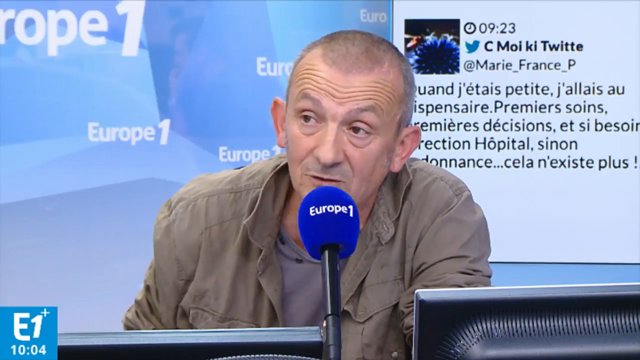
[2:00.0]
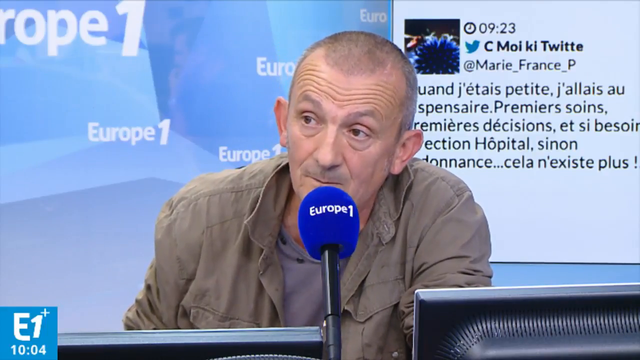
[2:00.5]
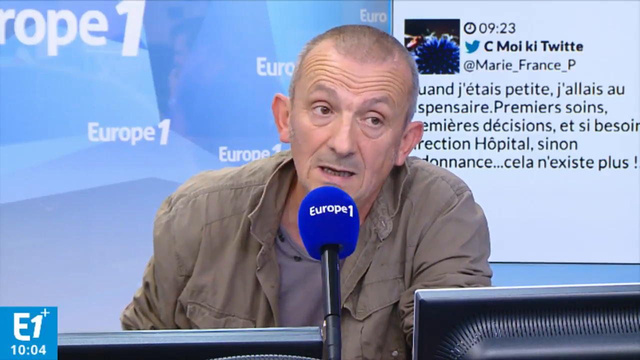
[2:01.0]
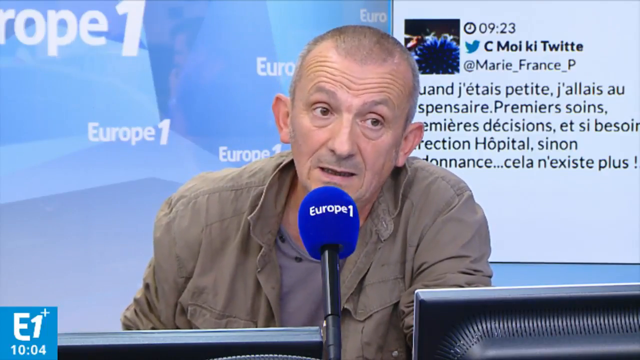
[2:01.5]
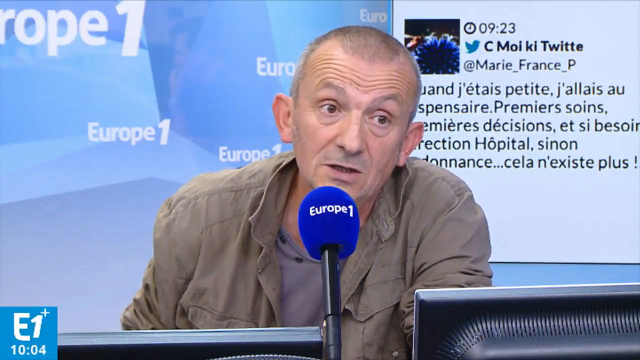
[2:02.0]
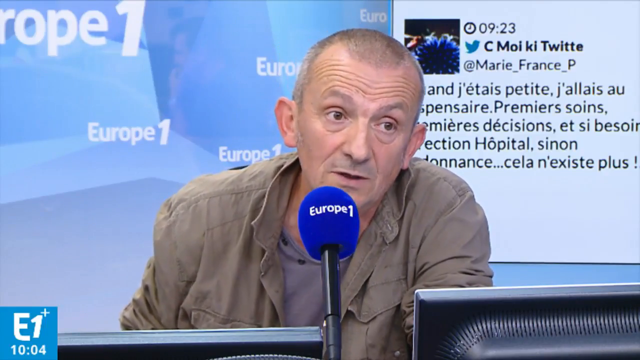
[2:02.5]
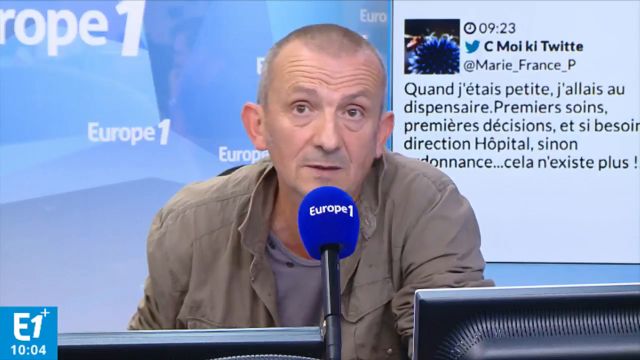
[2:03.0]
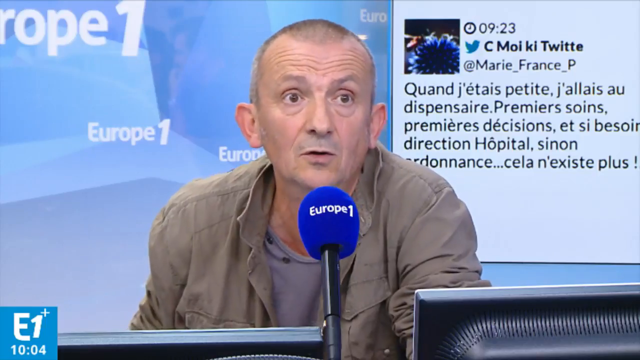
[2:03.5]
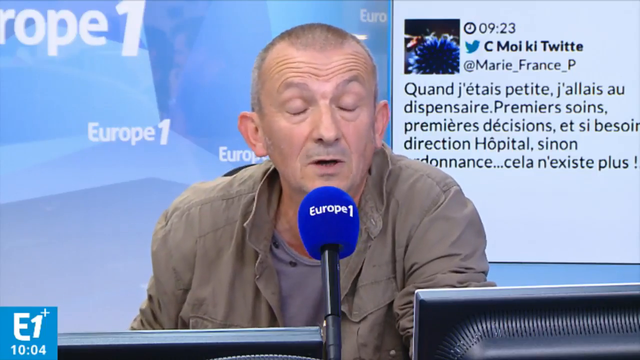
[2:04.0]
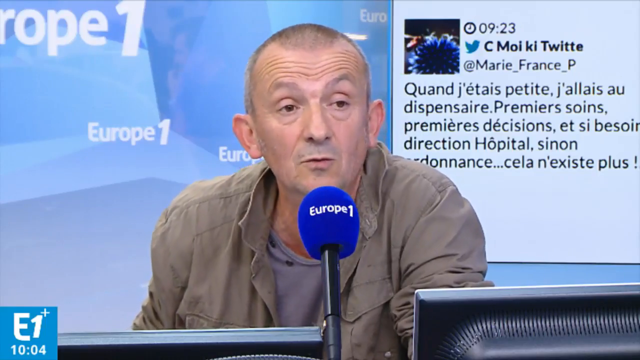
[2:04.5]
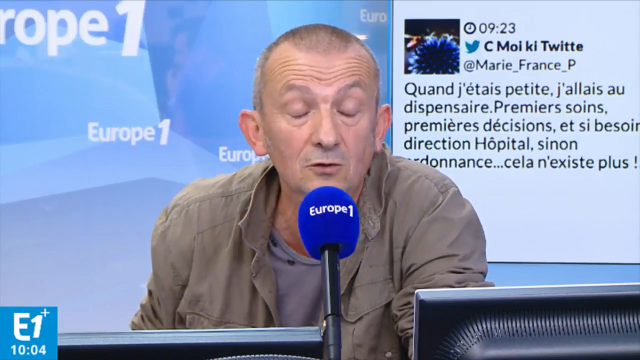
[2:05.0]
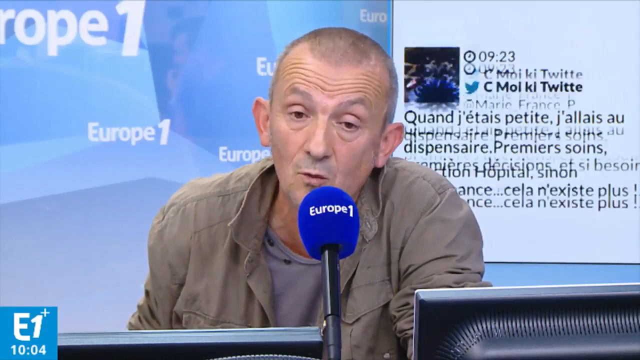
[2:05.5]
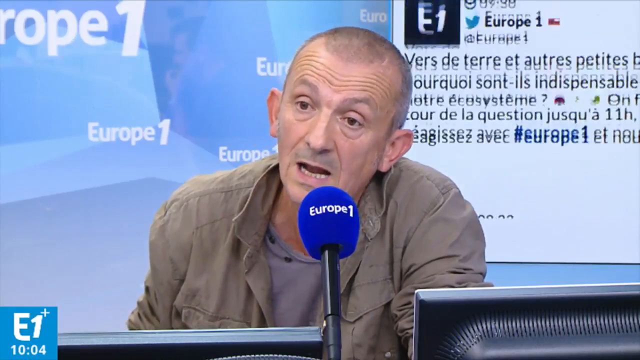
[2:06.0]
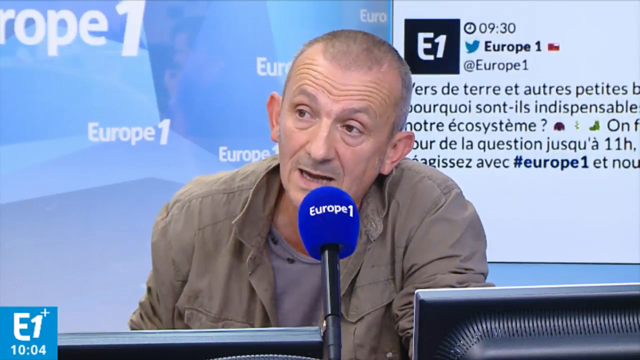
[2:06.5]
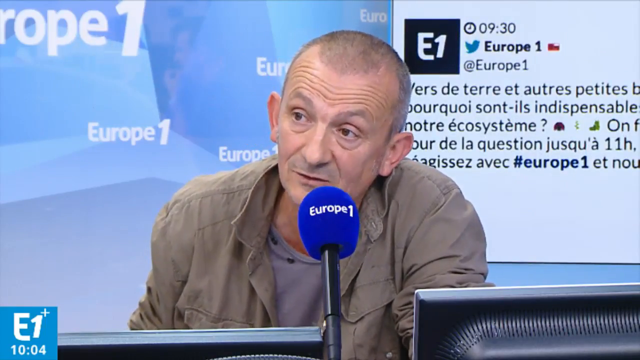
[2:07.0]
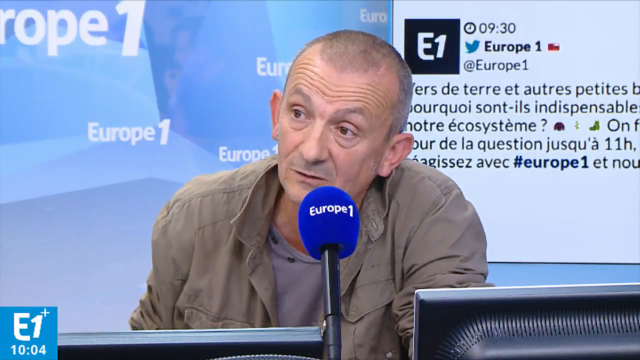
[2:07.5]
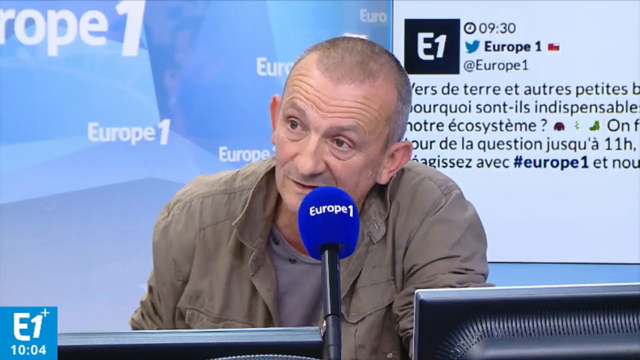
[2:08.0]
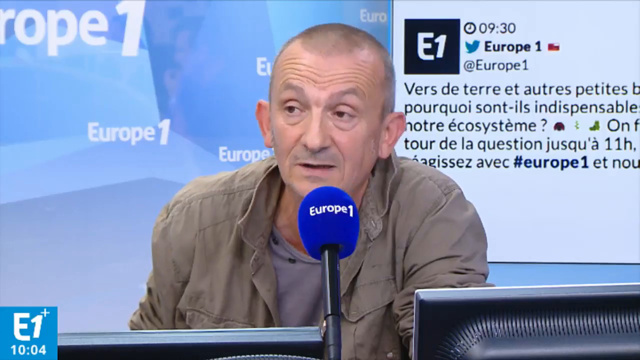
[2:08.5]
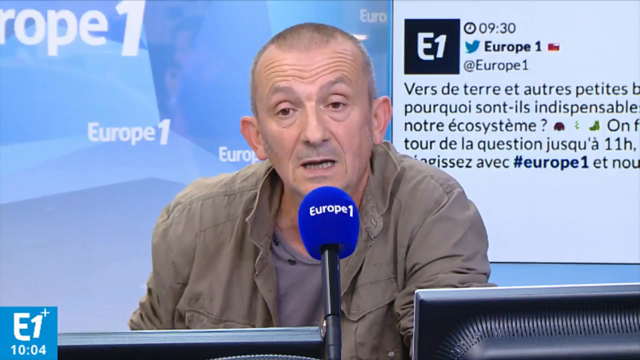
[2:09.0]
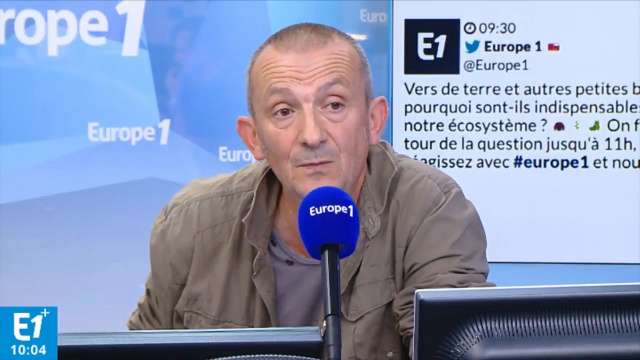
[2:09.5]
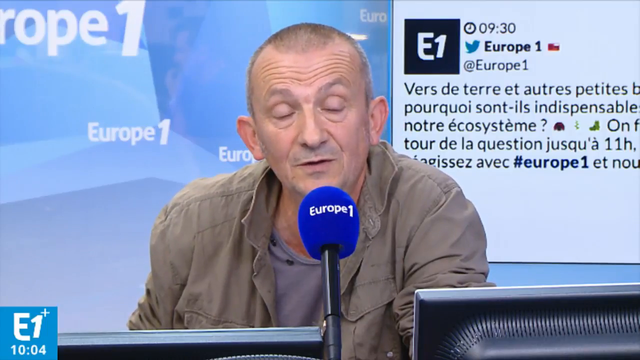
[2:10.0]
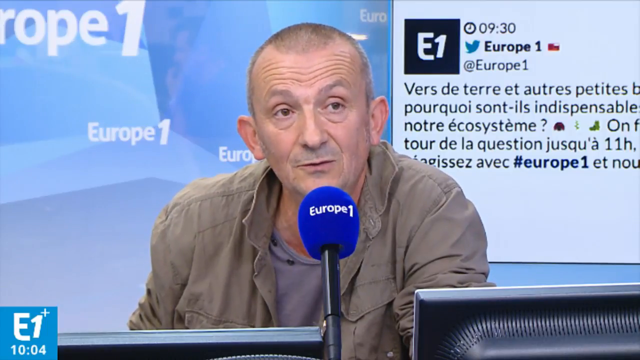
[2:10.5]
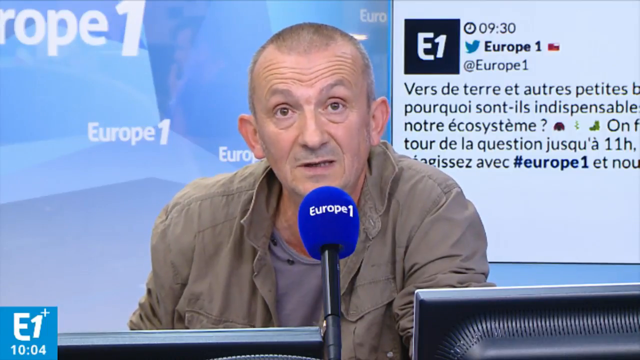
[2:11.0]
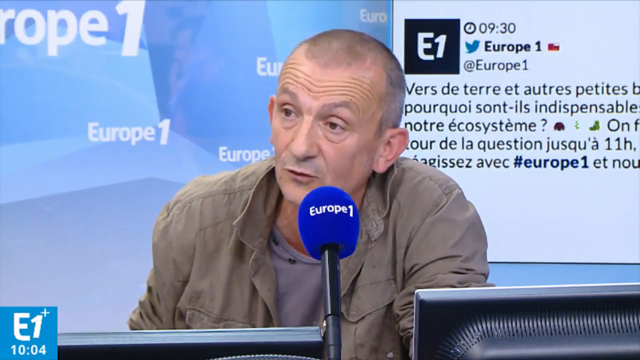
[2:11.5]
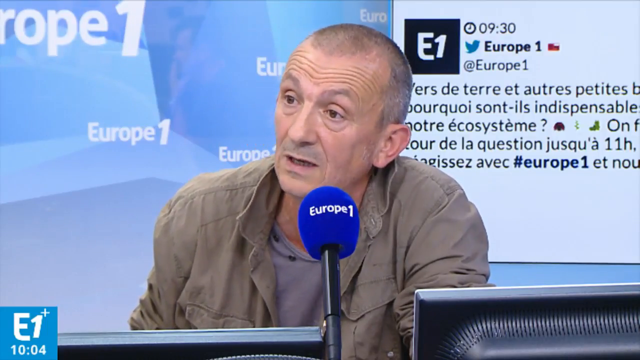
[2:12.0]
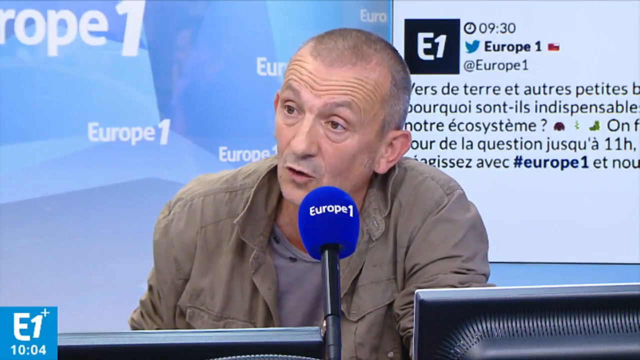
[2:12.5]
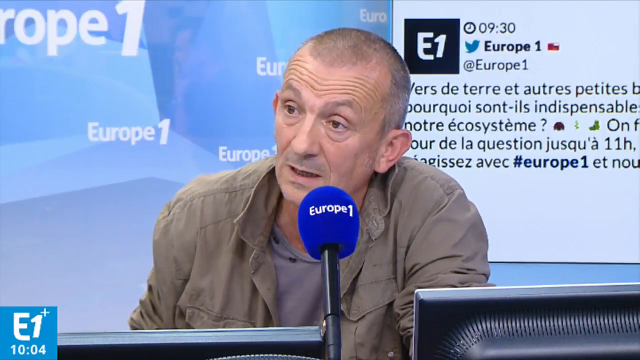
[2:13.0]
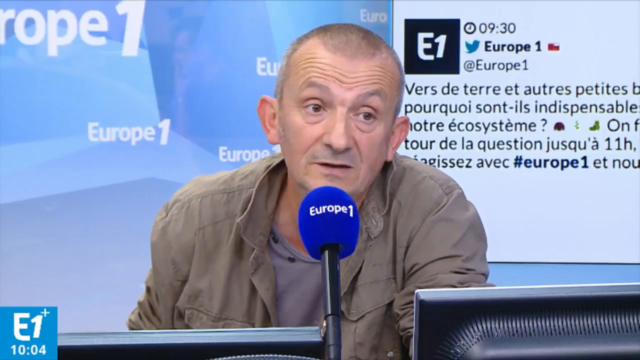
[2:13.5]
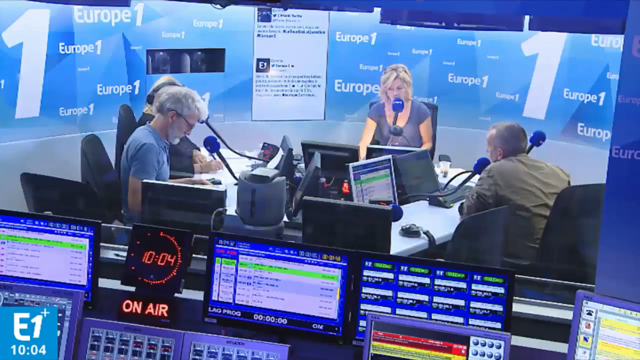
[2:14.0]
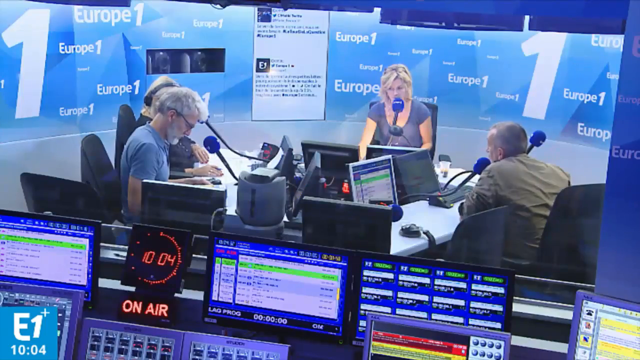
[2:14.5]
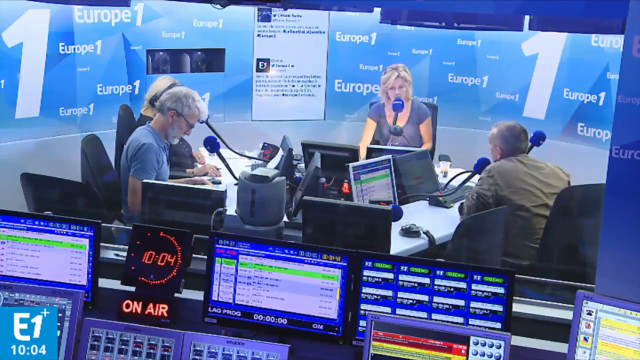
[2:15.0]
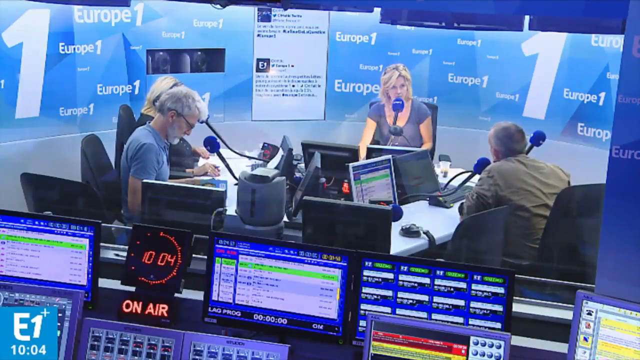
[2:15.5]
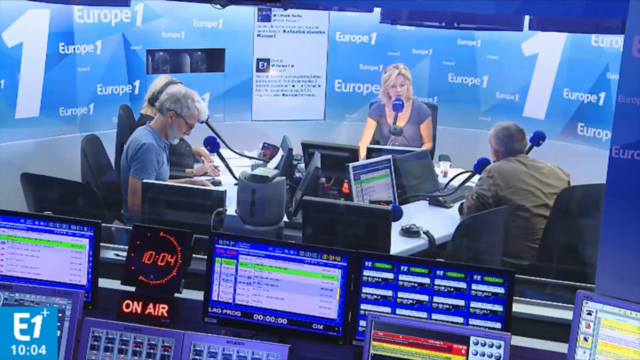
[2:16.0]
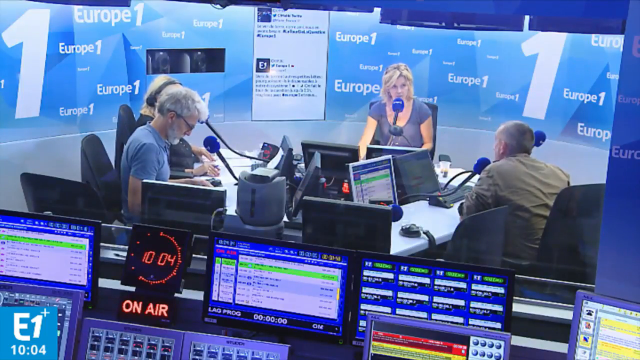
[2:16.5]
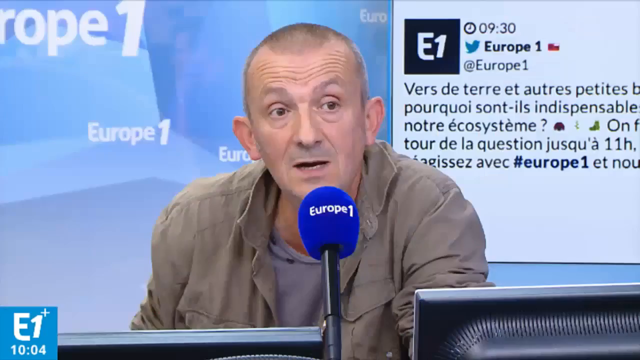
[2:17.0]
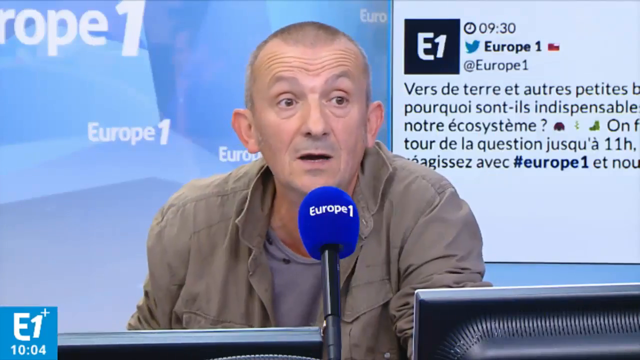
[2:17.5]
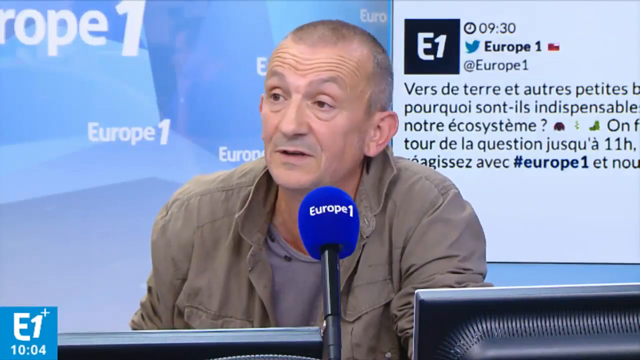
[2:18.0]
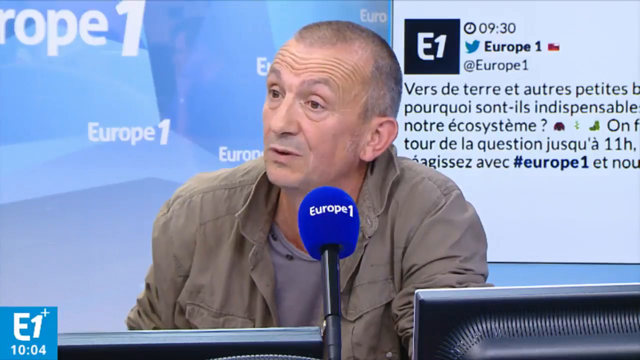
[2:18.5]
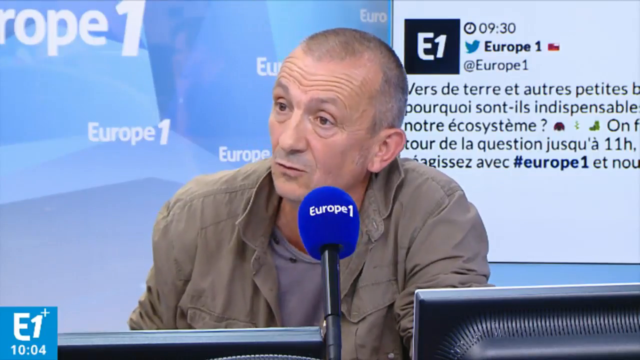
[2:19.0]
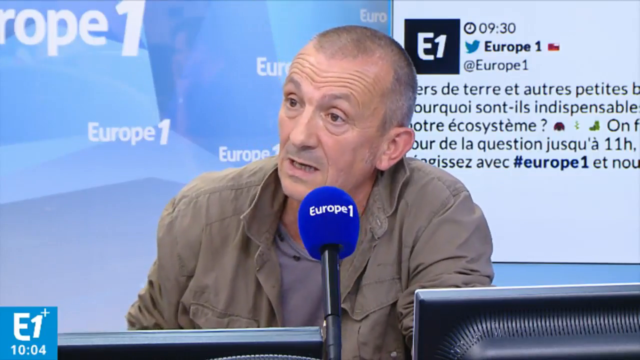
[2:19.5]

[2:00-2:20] The man is seated in the studio, a white man with big ears wearing an unbuttoned shirt over a t-shirt. In front of him are two laptops or two computers. He sits with his hands crossed and makes hand gestures. Two women appear: one, out of the seat, wears a floral skirt and a white t-shirt or white shirt; the other is interviewing the old man, wearing a blue top and headphones on her ears. The man's name, "Christopher", appears on the screen. The interviewer reads some papers on the table while holding a pen. Then they are seated, about four people, and another man is visible.